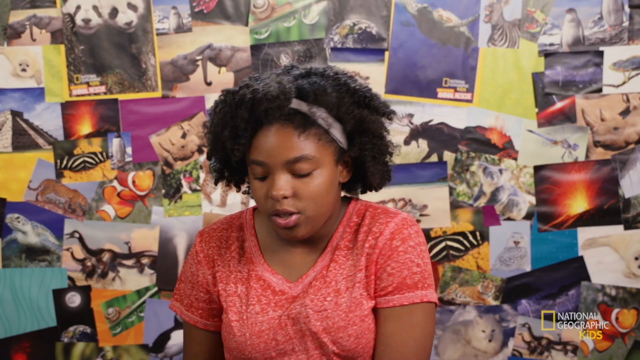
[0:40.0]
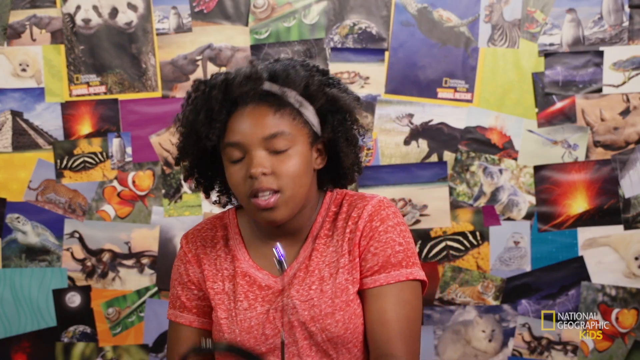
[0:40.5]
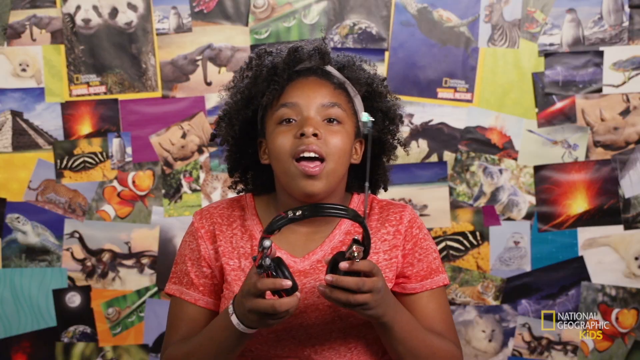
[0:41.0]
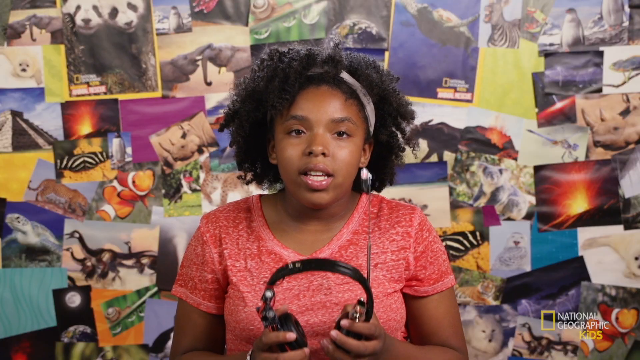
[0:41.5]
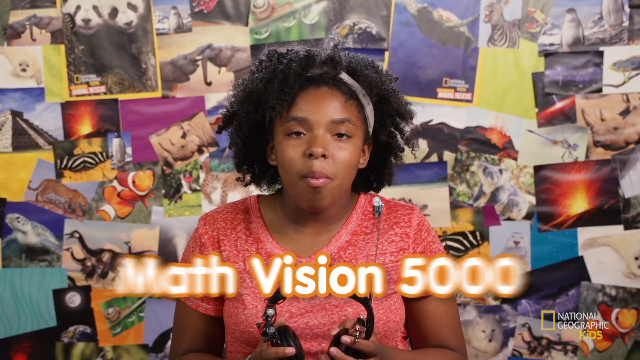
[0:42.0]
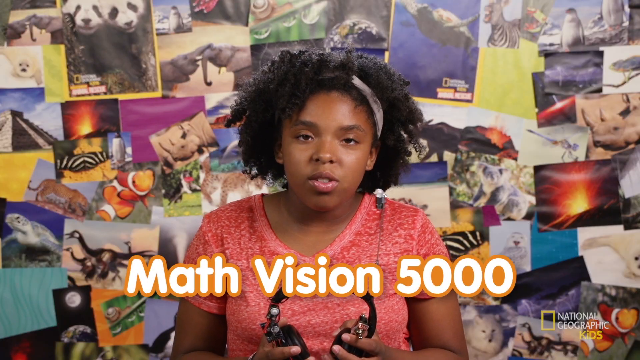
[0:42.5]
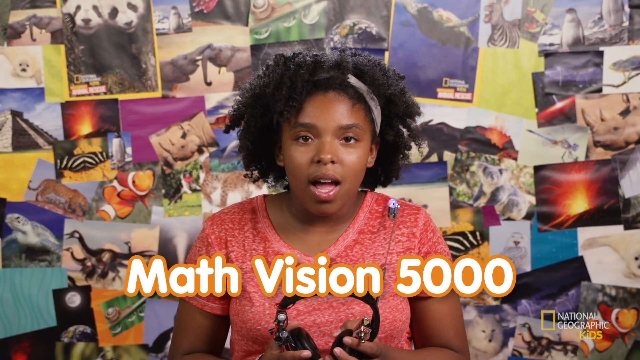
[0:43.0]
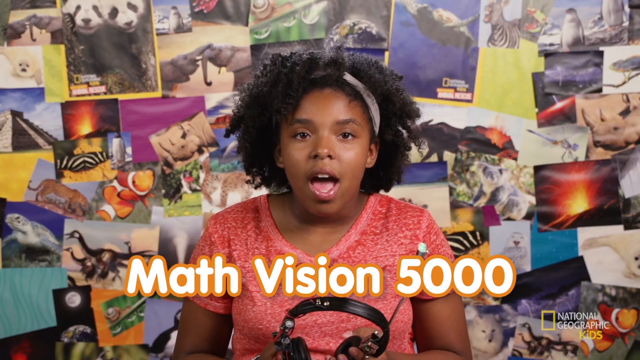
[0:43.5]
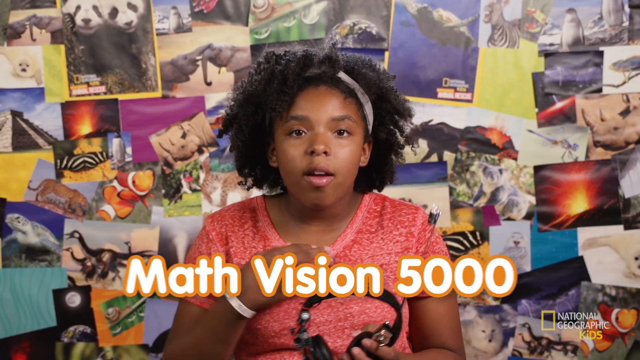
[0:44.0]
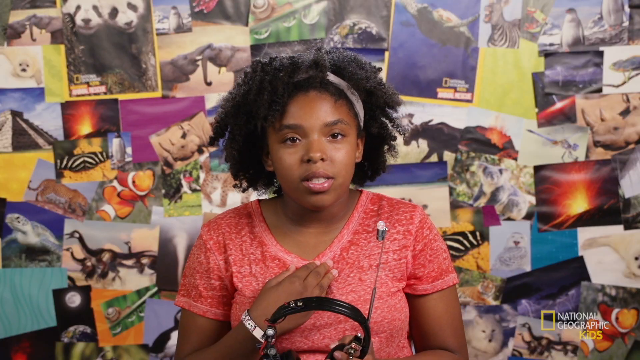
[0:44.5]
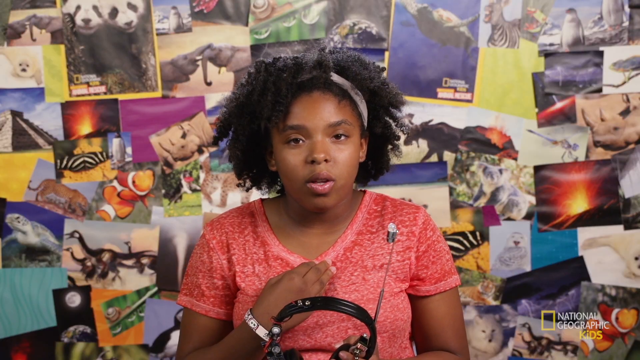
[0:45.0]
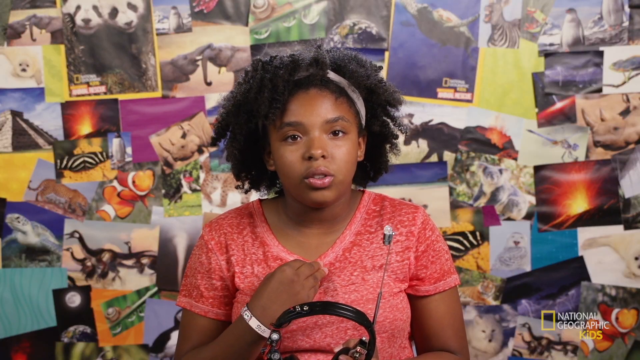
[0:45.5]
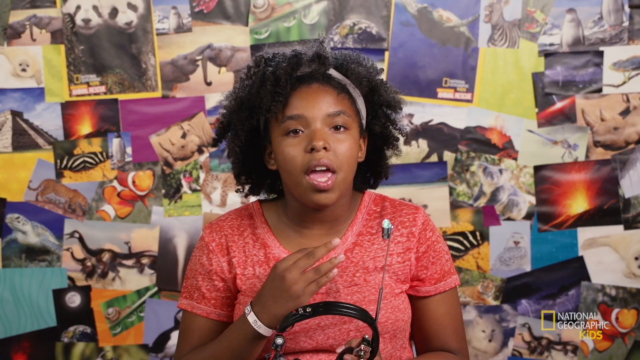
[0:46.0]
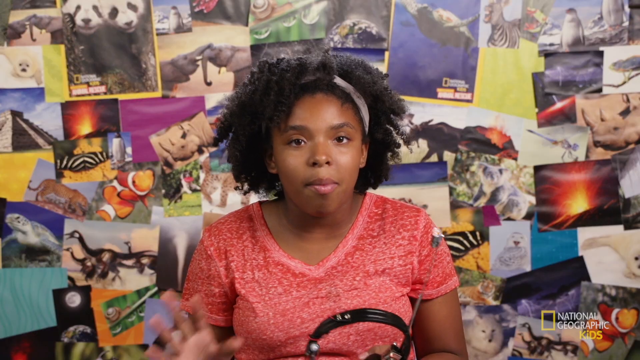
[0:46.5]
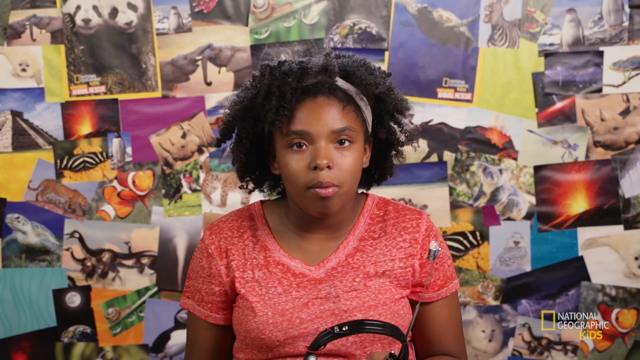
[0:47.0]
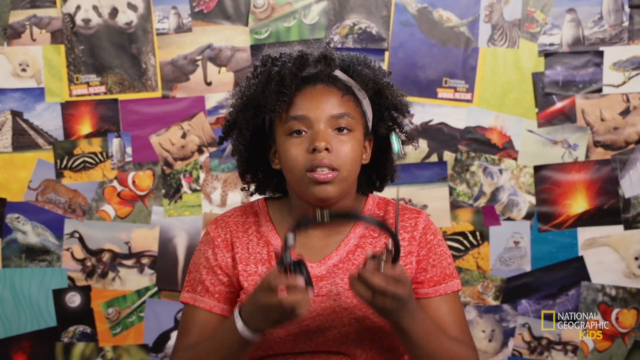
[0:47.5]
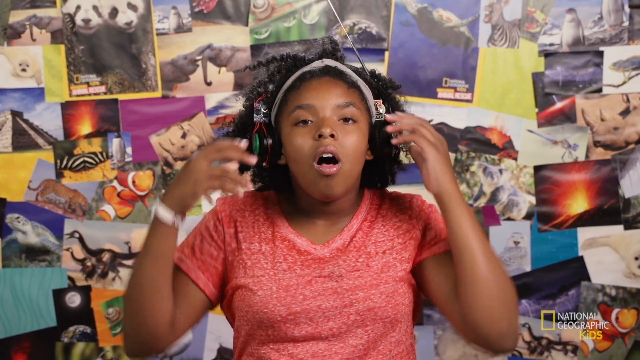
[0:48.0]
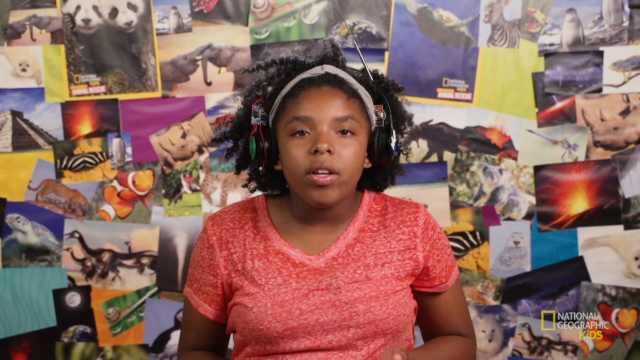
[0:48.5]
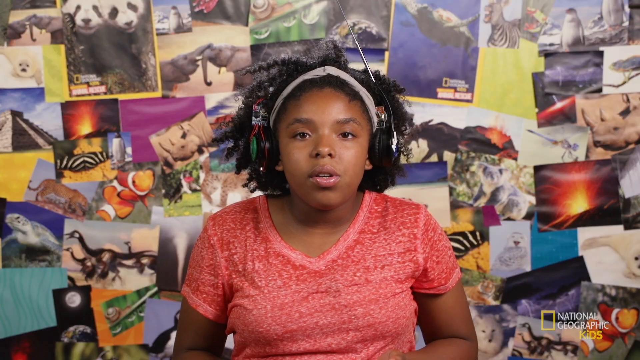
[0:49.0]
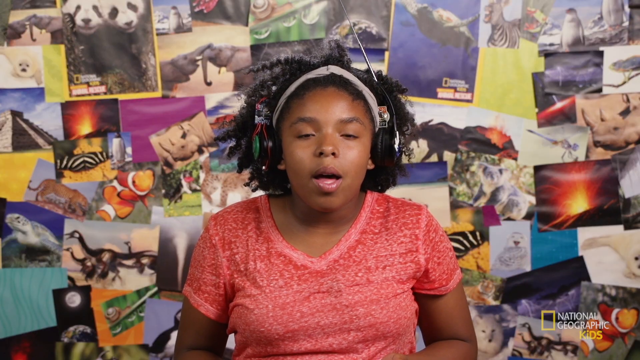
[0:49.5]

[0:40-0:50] The woman does something with her fingers and reaches for her headphones. The headphones are somewhat unique, with lots of cables where the head strap is and a receptor for receiving signals. An antenna on the side of the headphones reaches high, almost double the height of the headphones themselves. Her face shows expression as she talks. Text then appears on the screen reading "MathVision 5000", in white with orange outlines. Still talking to the camera, she holds the headset with both hands, then lets go with one hand to touch herself as she expresses herself. Next she is wearing the headphones, still looking at the camera and talking.